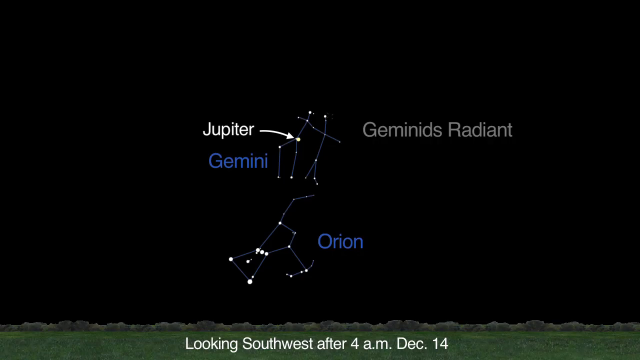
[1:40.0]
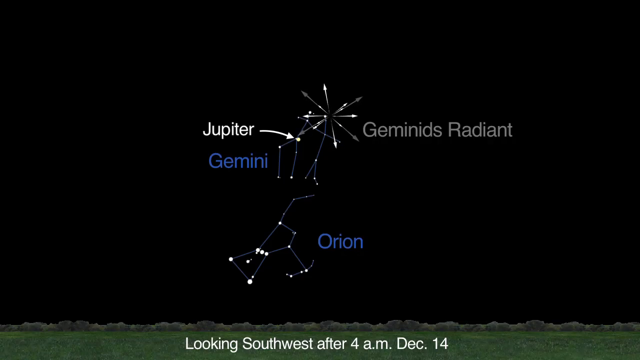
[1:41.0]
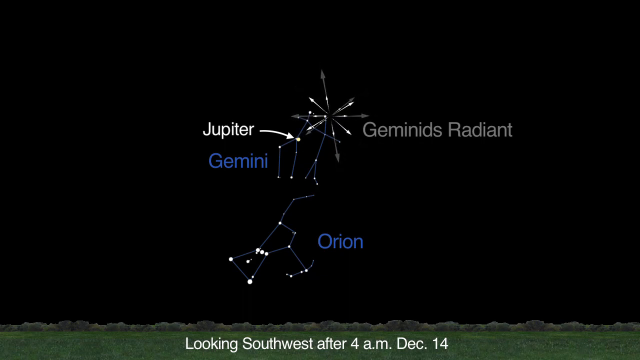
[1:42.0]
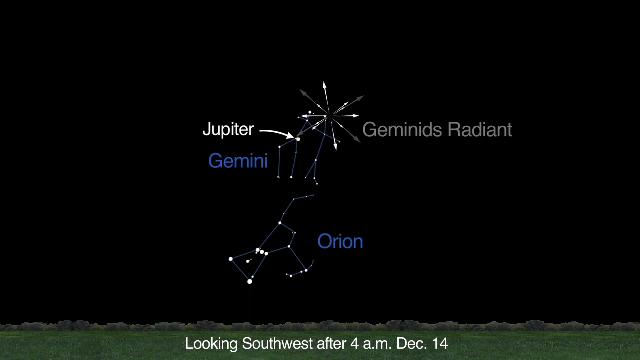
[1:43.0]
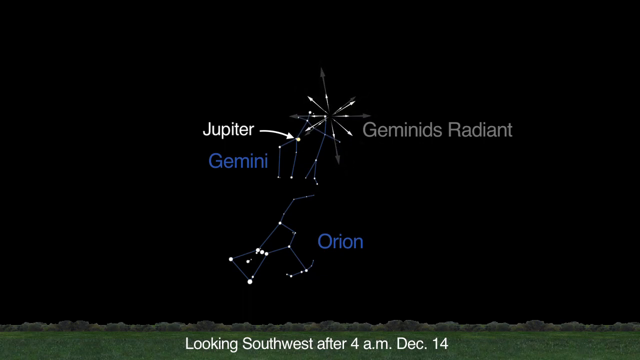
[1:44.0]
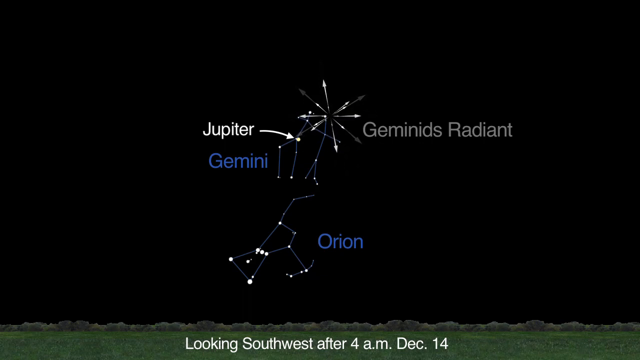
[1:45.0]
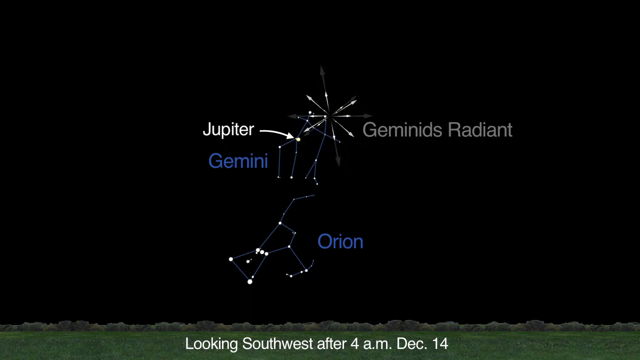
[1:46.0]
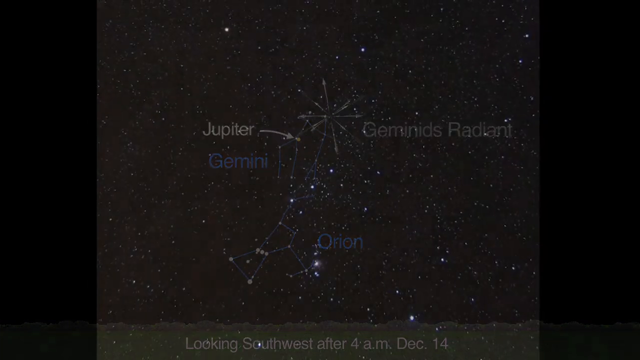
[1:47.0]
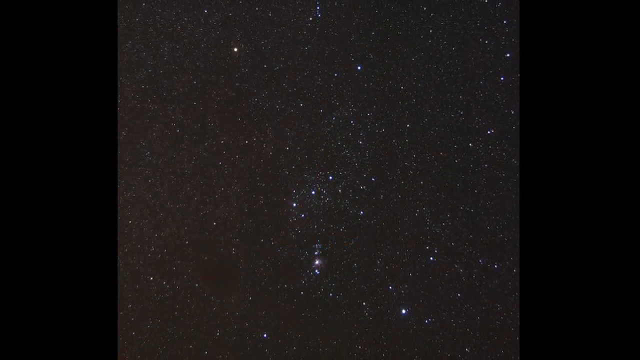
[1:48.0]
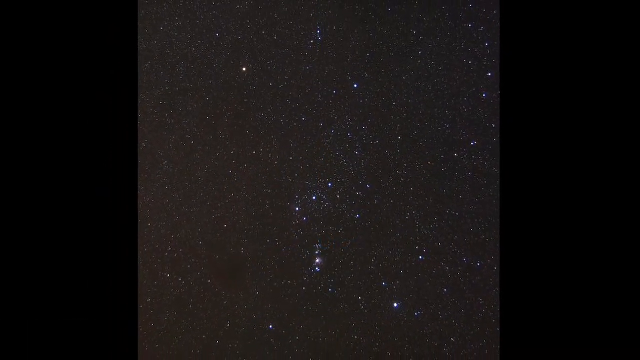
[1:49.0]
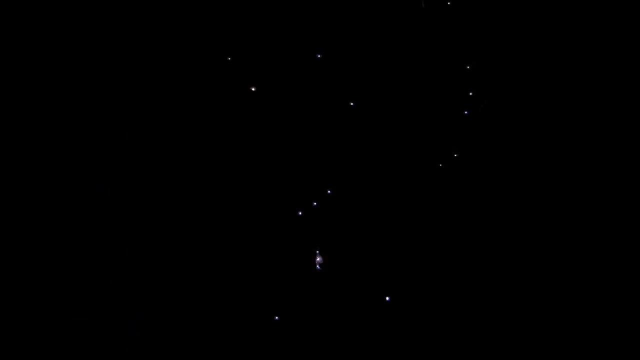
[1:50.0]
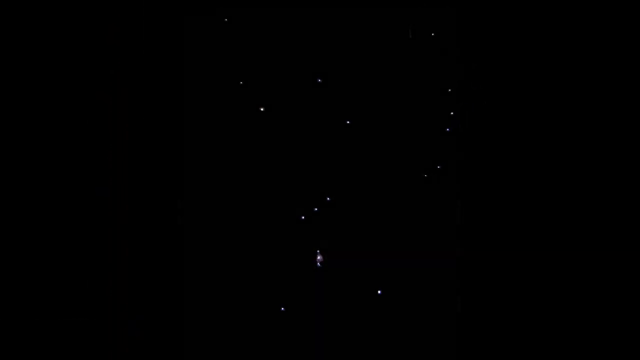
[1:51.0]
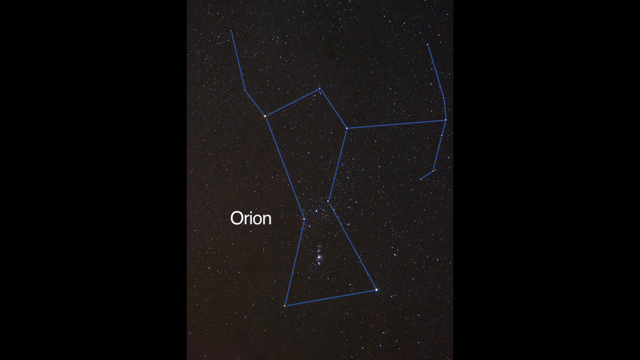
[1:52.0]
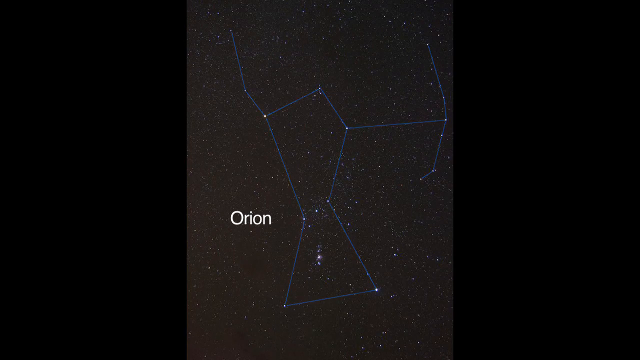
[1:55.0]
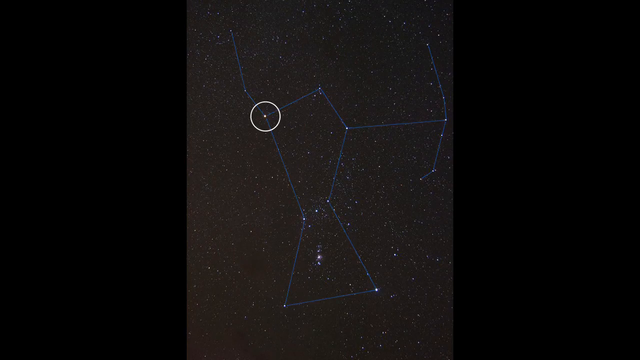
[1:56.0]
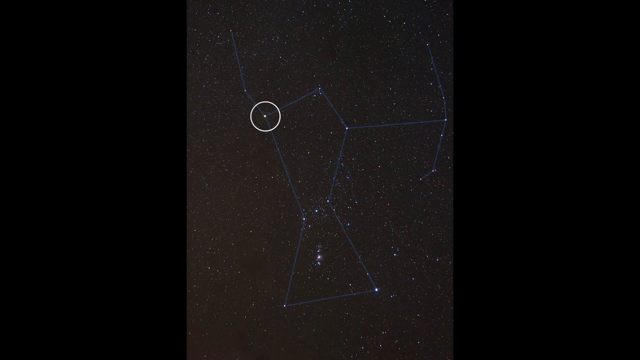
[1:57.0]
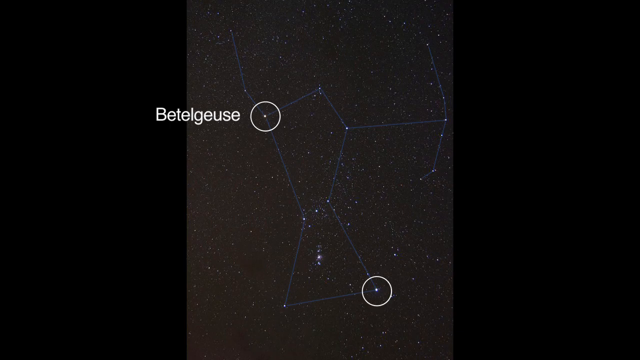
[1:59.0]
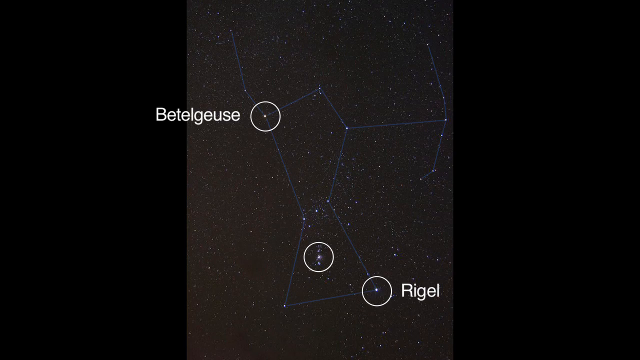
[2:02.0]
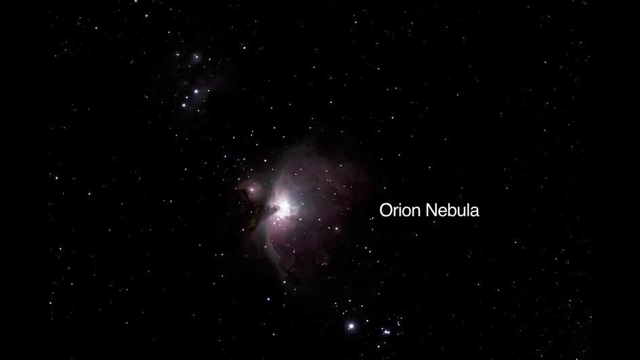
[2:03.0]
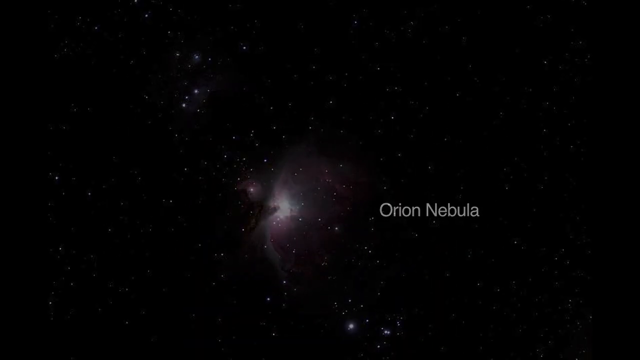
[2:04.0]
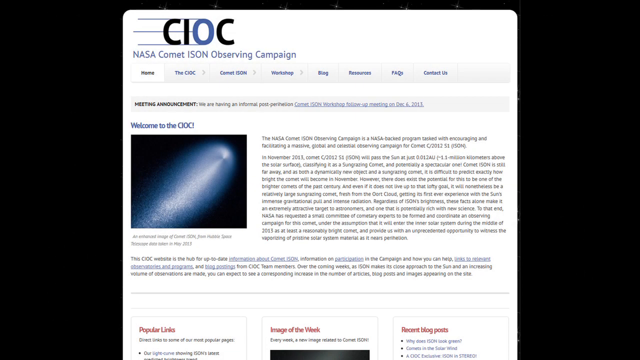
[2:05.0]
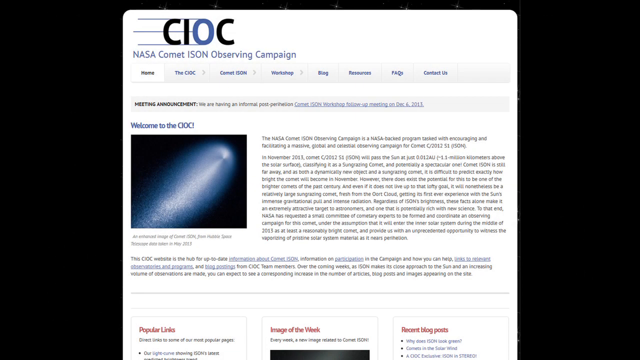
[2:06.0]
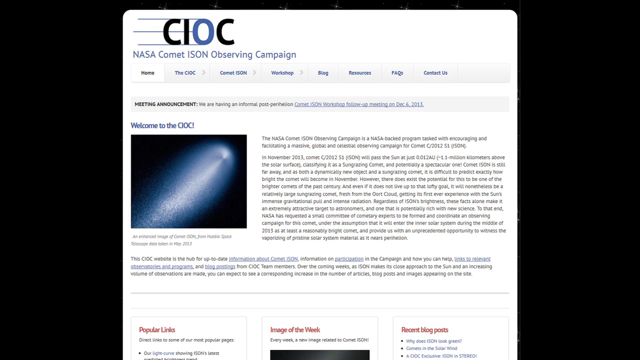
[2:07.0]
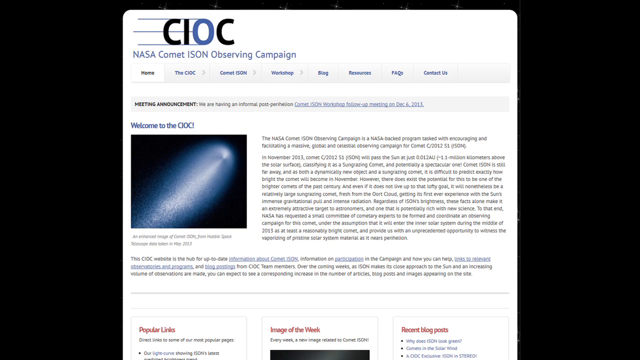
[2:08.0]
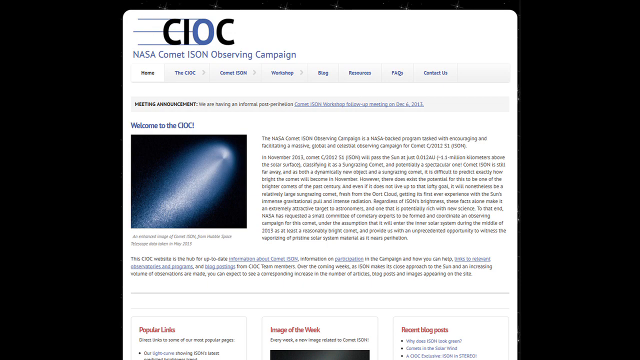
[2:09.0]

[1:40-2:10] A picture of the Geminids radiant with Jupiter, Gemini and Orion appears, looking southwest after 4 a.m. on December 14th. Jupiter looks like a big white starburst against a black sky full of meteors. A drawing of Orion in blue shows its different parts, labeled Beltegeuse, Rigel, Orion and Orion Nebula. An explanation of a NASA comet website is shown, the NASA Comet ISON observing campaign.